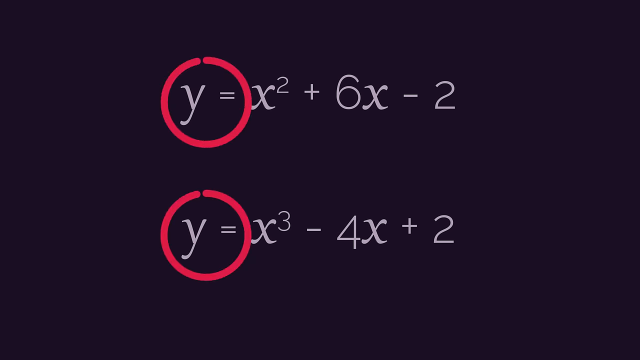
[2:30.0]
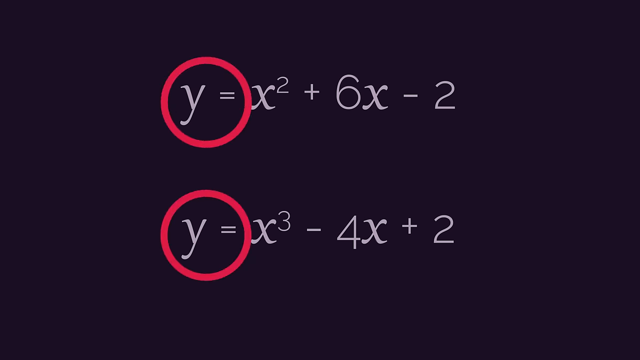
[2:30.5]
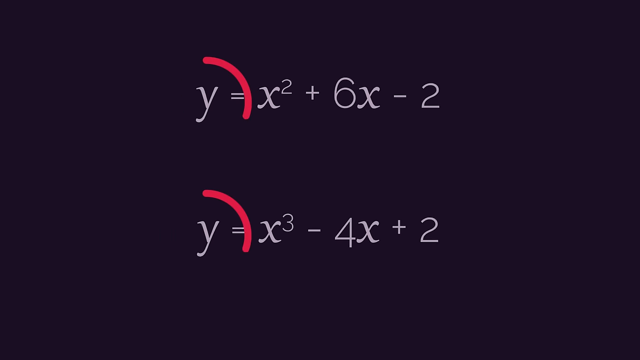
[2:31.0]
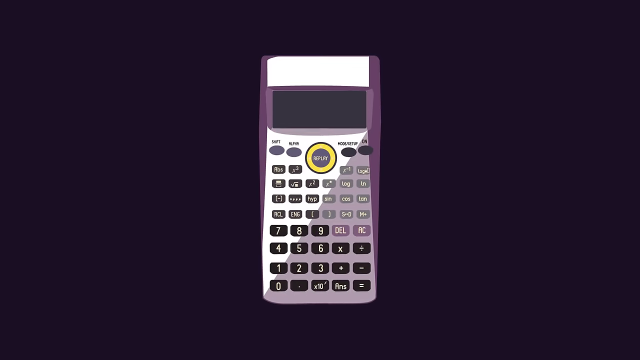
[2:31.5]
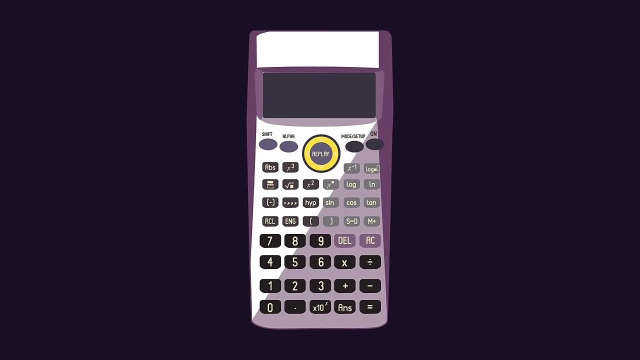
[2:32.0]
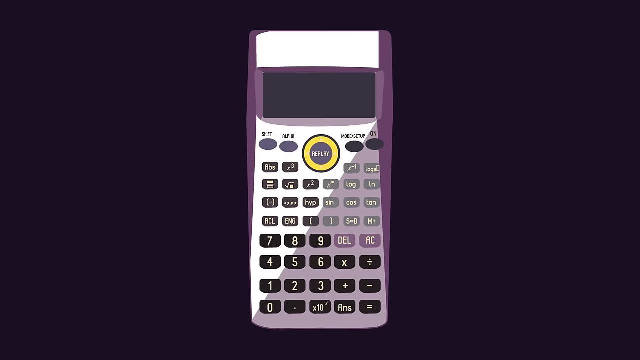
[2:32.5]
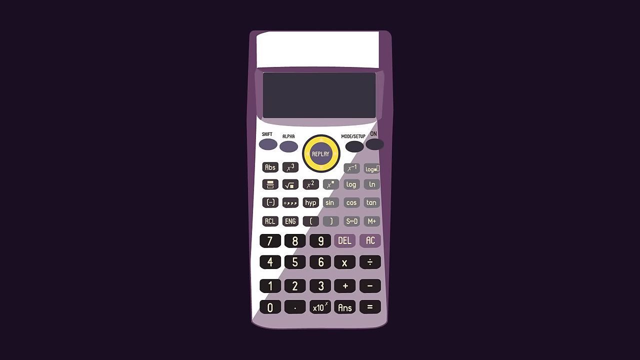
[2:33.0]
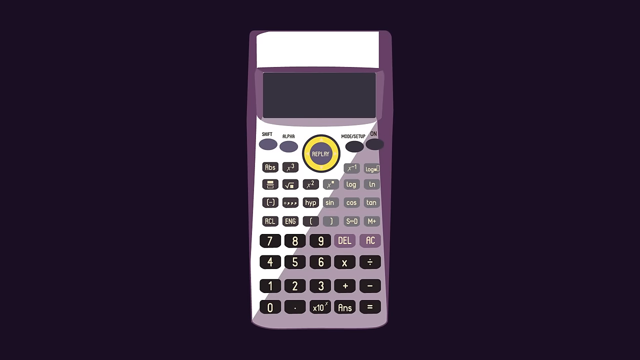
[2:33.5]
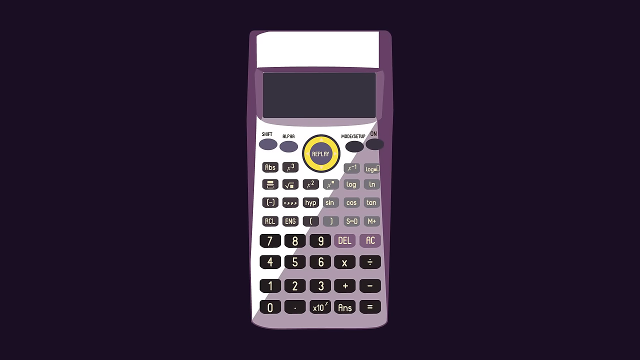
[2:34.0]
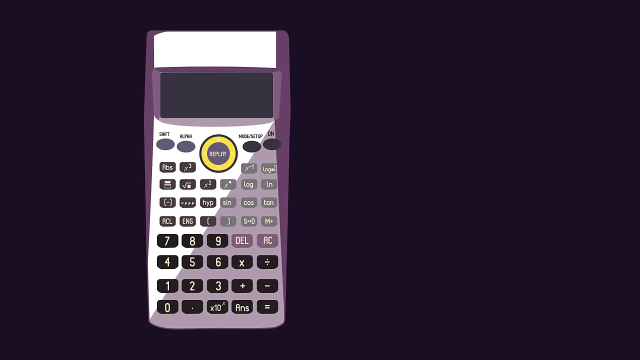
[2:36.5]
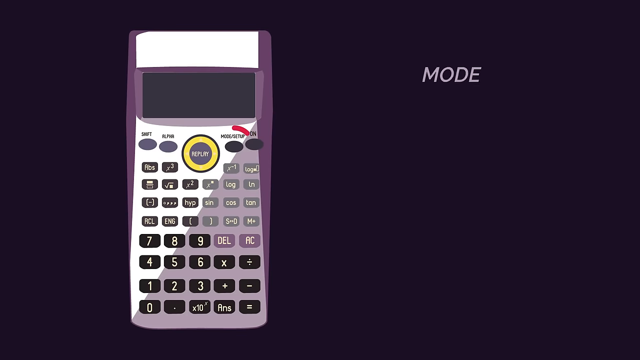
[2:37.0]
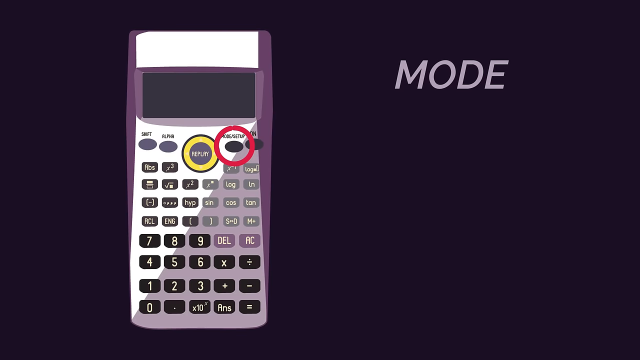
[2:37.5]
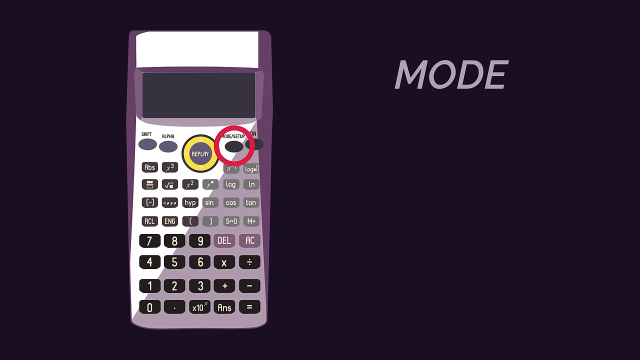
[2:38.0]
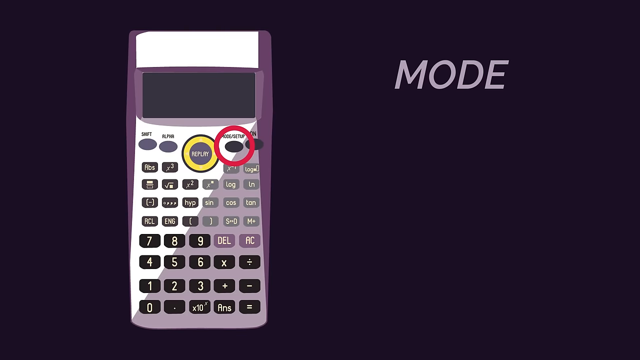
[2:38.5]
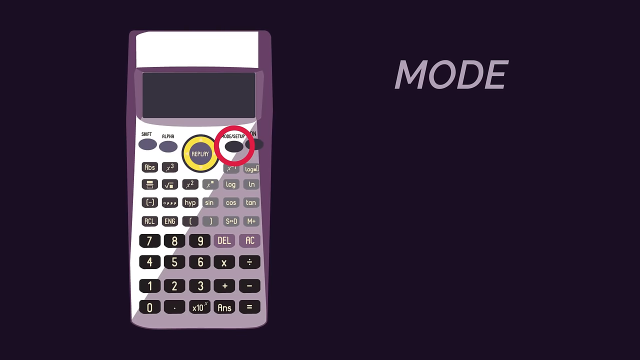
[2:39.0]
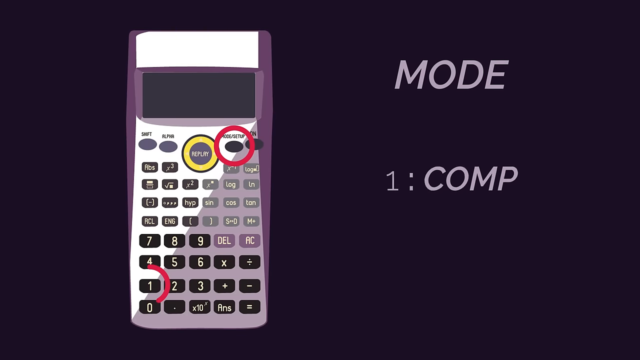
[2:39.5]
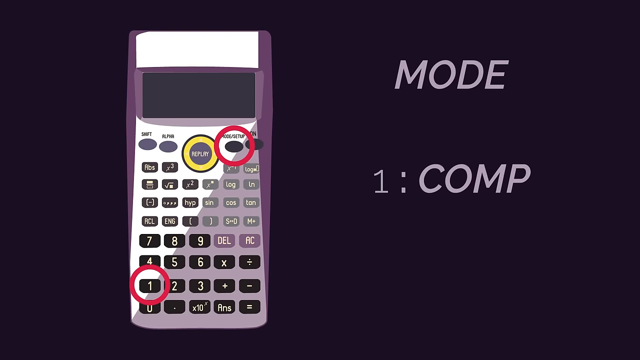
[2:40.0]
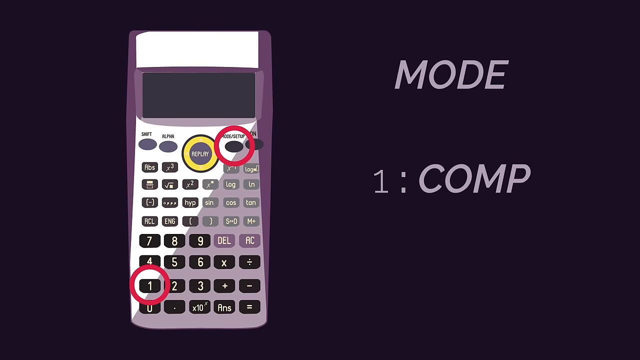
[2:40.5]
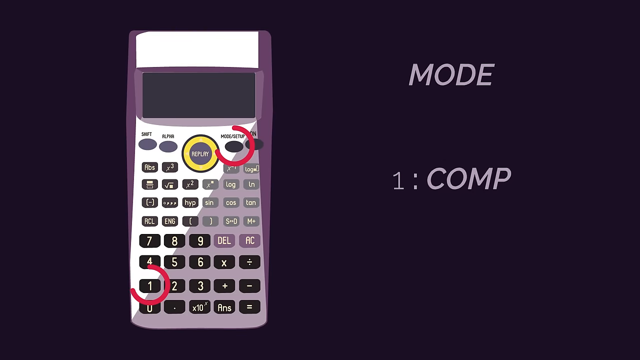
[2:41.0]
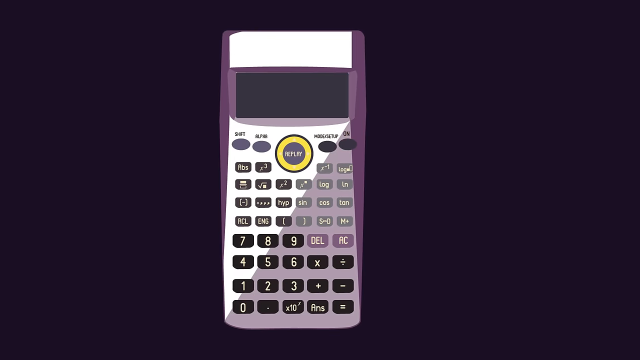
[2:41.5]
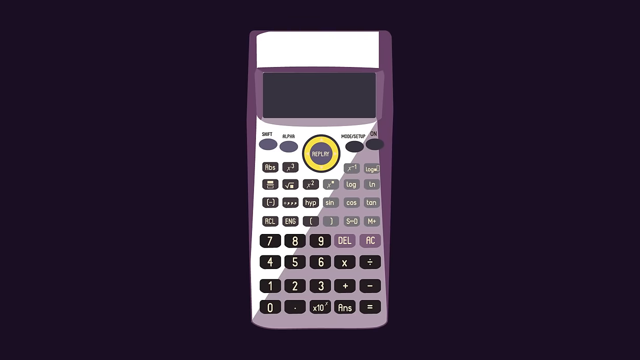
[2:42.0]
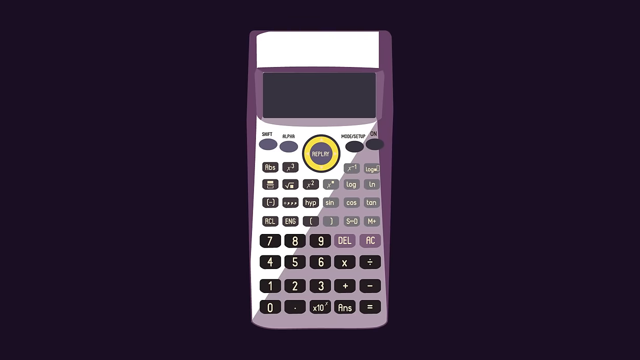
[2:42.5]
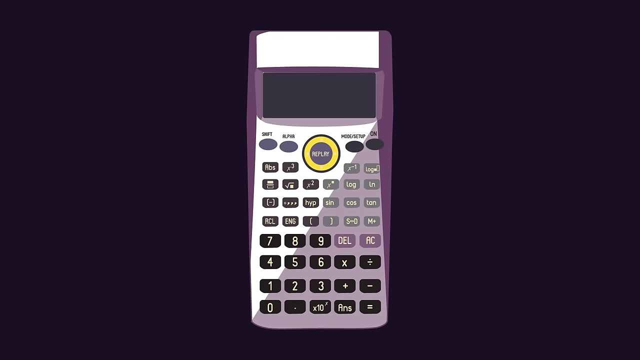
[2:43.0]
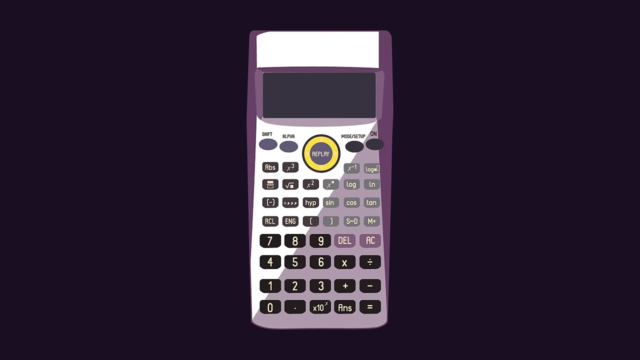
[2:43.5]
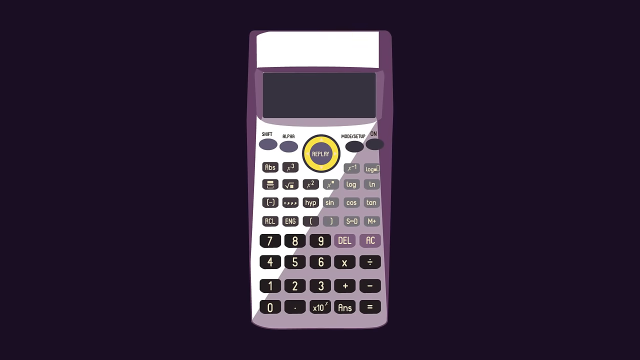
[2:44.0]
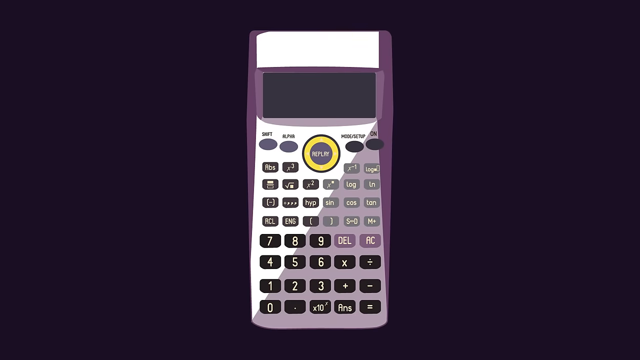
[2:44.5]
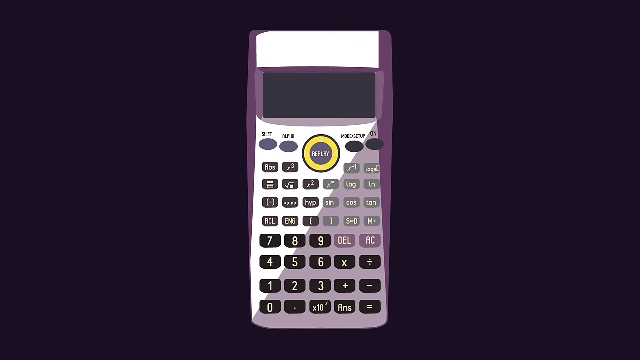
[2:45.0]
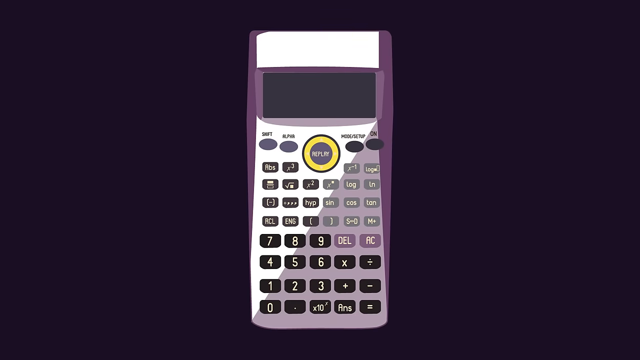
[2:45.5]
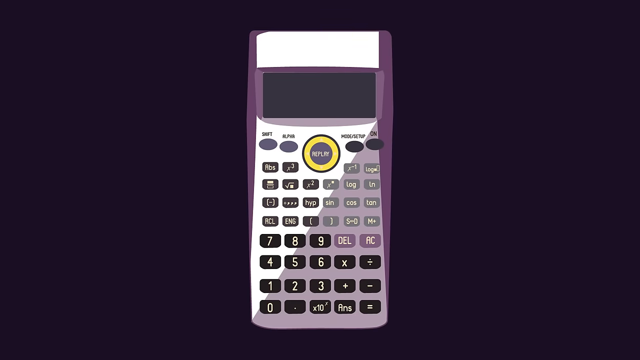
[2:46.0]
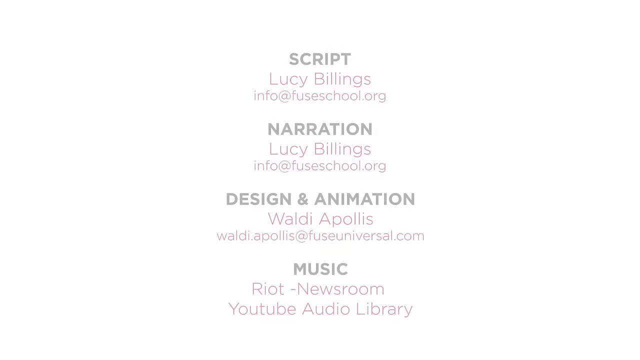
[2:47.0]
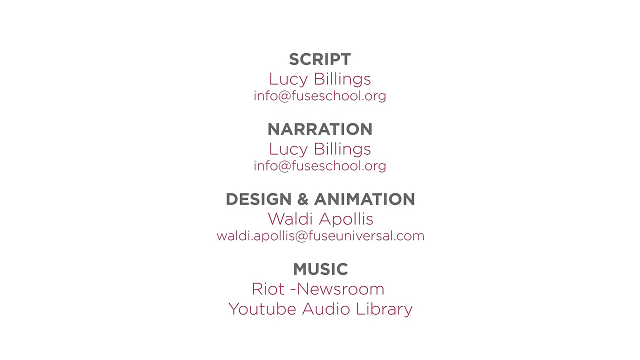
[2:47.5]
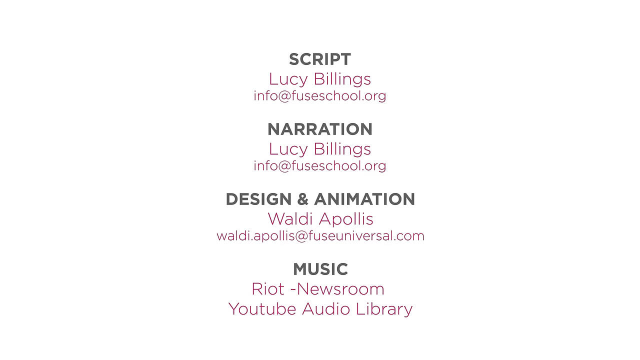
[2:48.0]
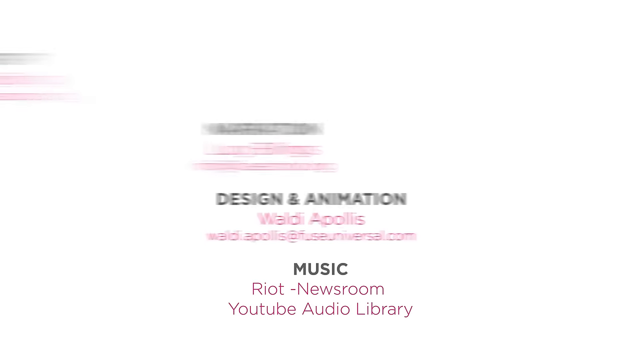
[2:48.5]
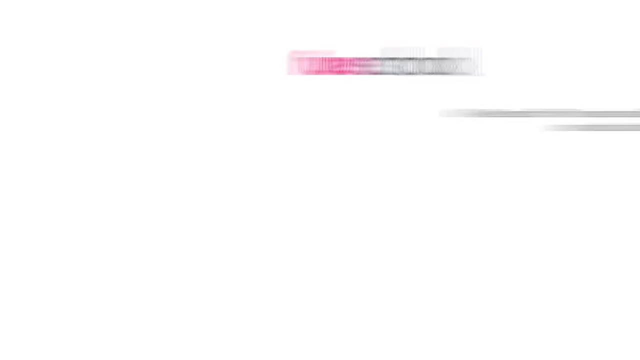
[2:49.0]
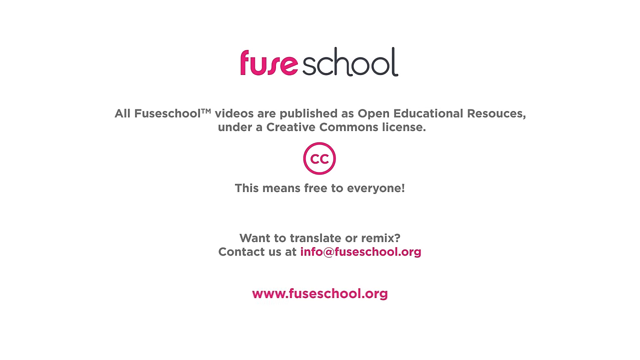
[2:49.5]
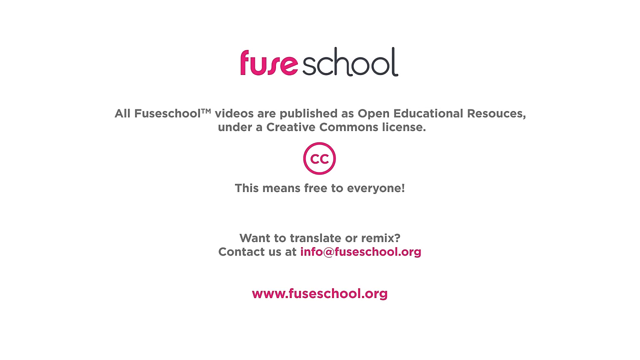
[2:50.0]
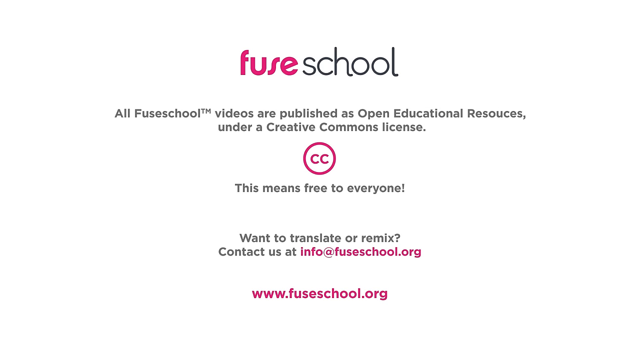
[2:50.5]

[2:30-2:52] Two equations are shown: y equals x squared plus 6x minus 2, and y equals x cubed minus 4x plus 2. The equations go away, and a purple calculator appears, with a white rectangle on top, a screen not displaying any numbers, black, gray, and purple buttons, and a replay button encircled in yellow. The camera shifts to the left, and the mode button is circled while a caption reading "mode" appears to the right. Then the number one is circled and a caption says "one comp." The camera shifts back to the center of the screen, and the screen fades to white. Credits state that the script was by Lucy Billings, the narration was by Lucy Billings, the design and animation was by Waldie Appelis, and the music was by Riot Newsroom and the YouTube Audio Library. The Fuse School logo then appears with a disclaimer saying "All Fuse School's videos are published as open educational resources under a Creative Commons license." The CC logo appears, with the text "This means free to everyone. Want to translate or remix? Contact us at info at fuseschool.org." At the end, the link fuseschool.org appears.